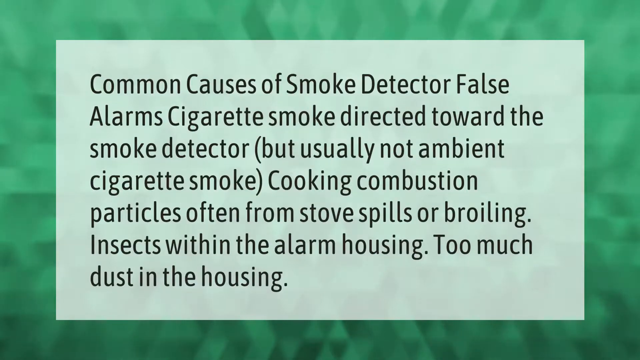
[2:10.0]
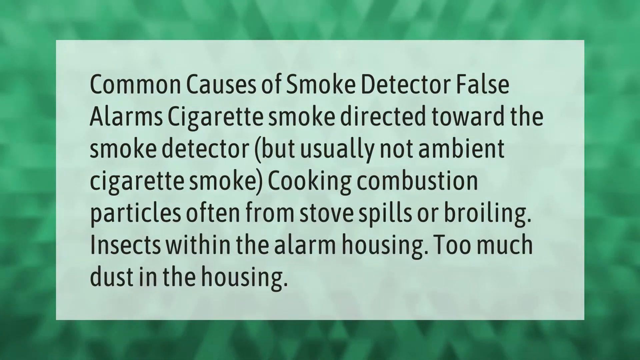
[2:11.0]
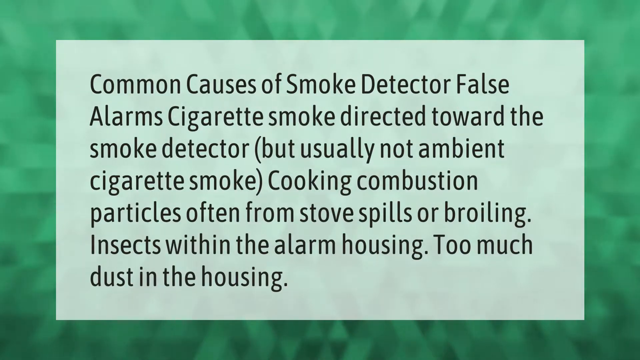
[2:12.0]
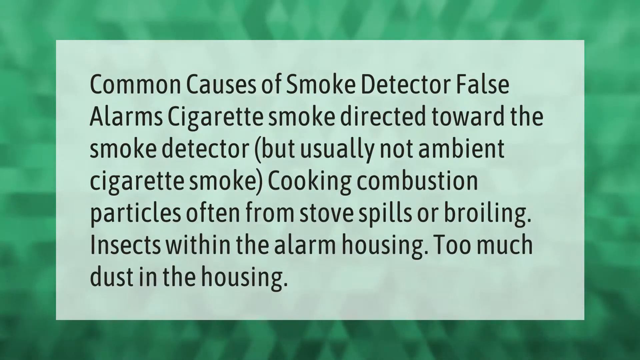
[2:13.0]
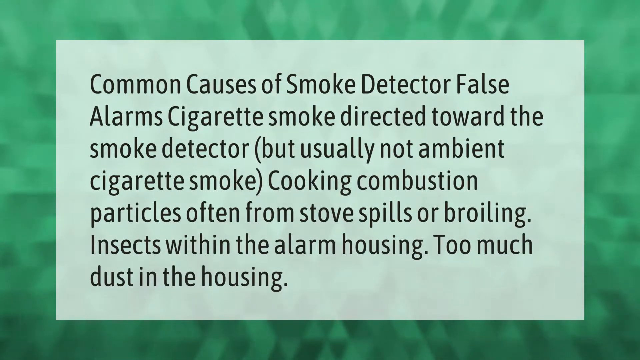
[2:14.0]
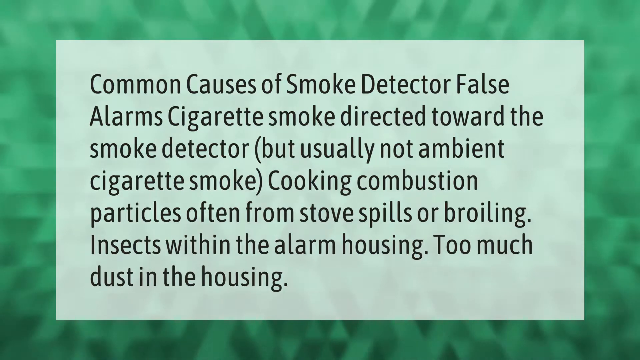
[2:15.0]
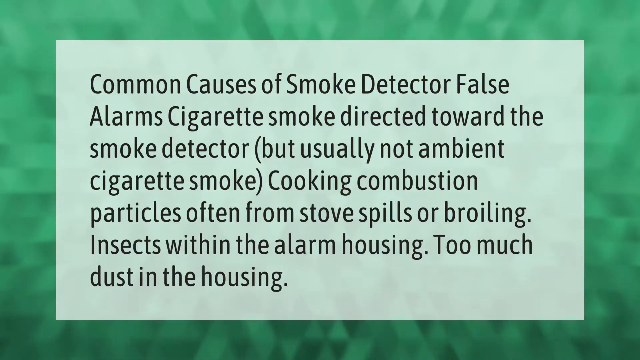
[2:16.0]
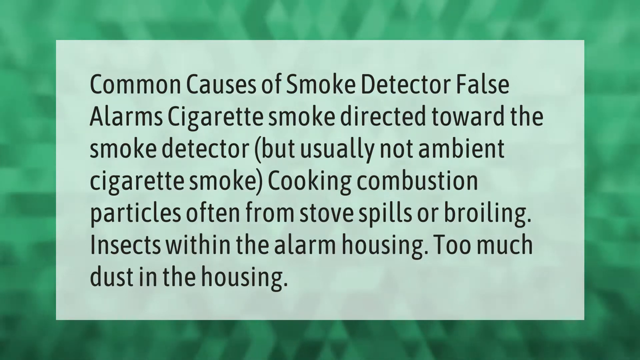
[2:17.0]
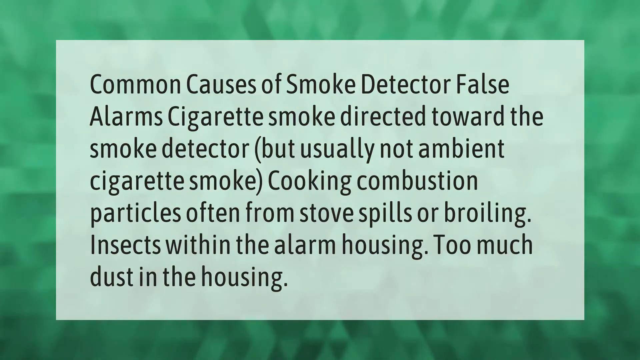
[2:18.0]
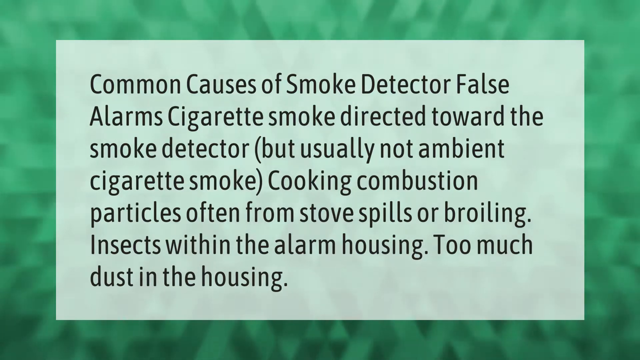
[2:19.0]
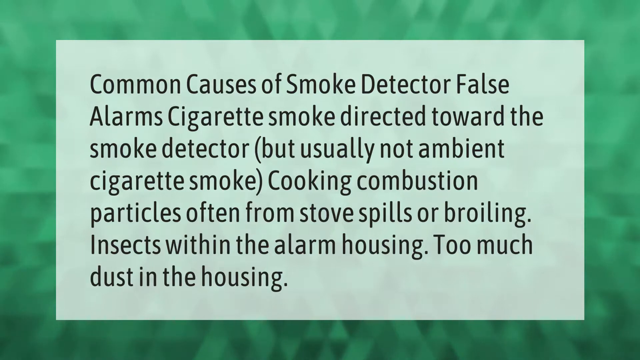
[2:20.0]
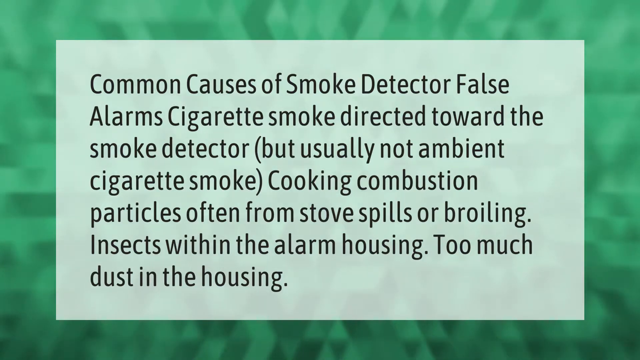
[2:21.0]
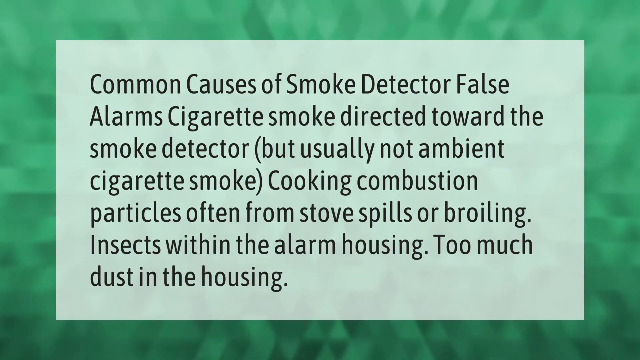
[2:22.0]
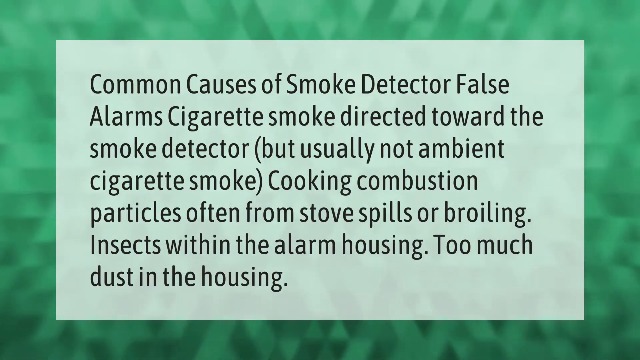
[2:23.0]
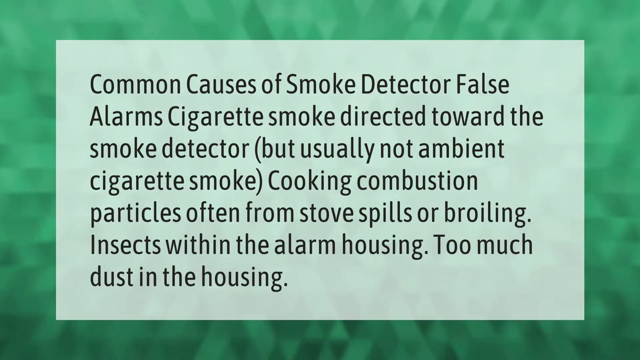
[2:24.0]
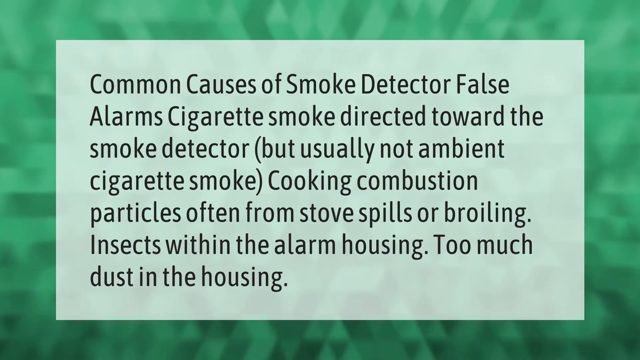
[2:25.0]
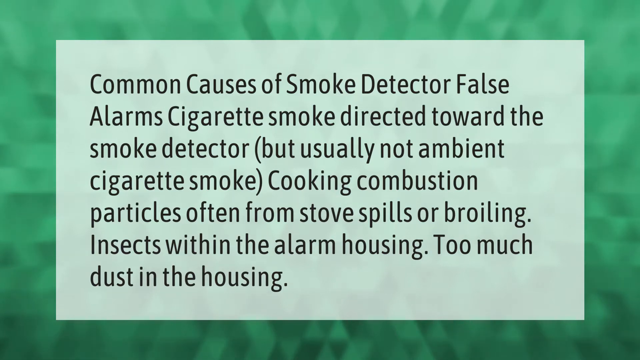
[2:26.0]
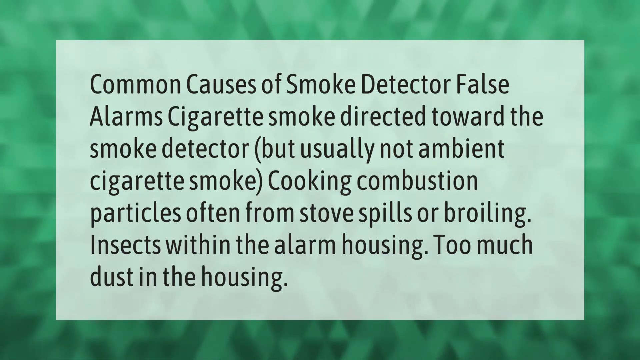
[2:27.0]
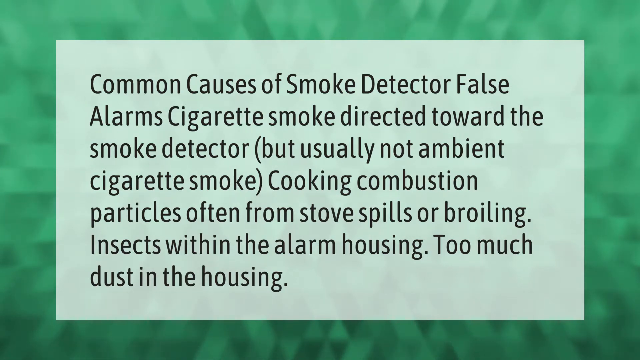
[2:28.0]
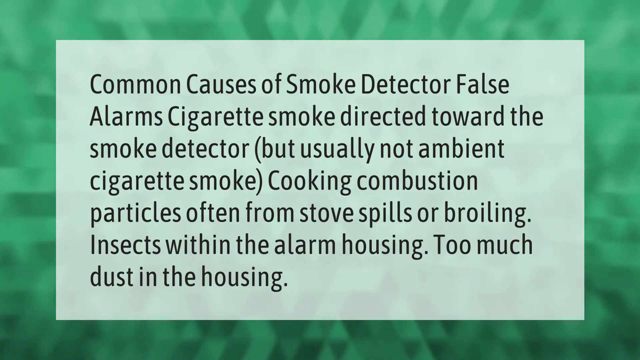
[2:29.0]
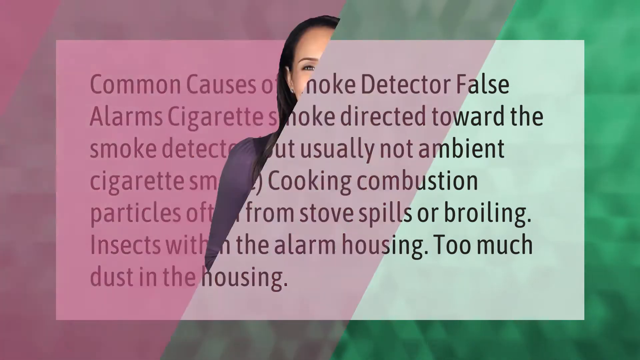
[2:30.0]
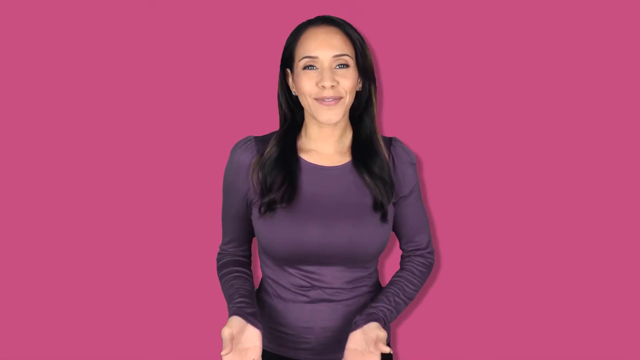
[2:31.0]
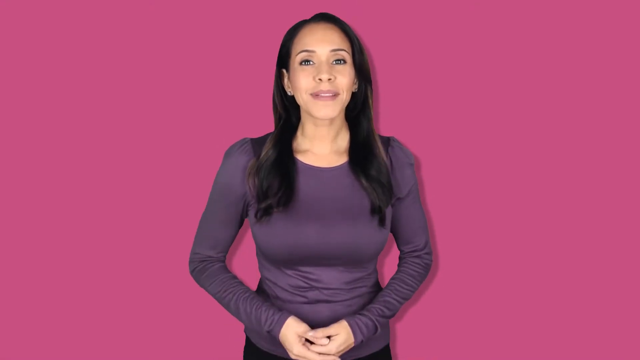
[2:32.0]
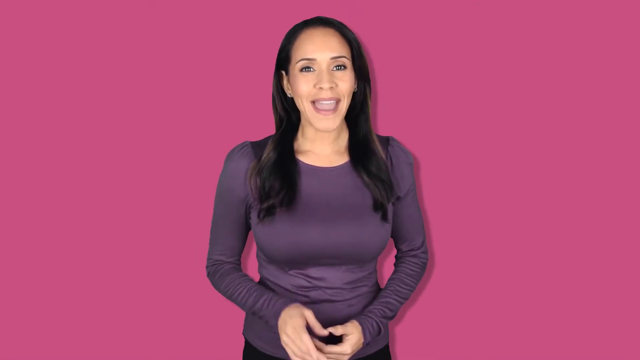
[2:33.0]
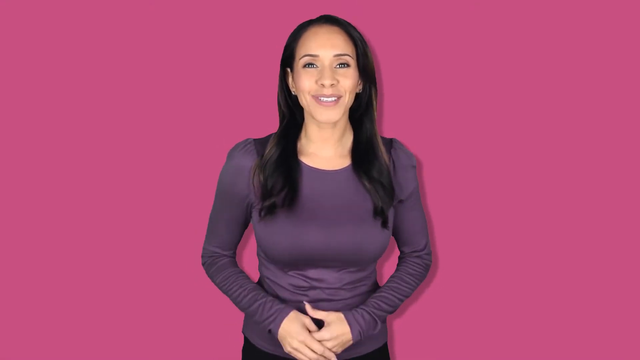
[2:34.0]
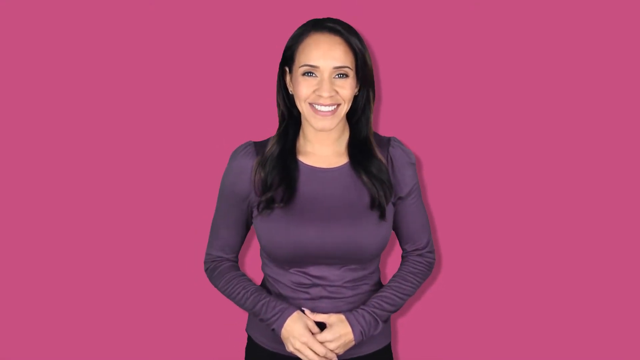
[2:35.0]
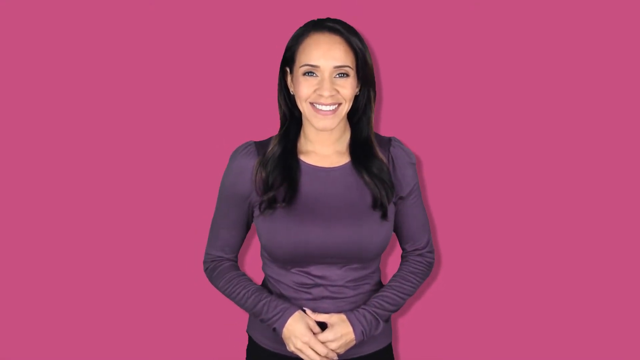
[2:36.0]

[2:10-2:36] The text "Common causes of smoke detector false alarms" is on screen, listing "cigarette smoke directed toward the smoke detector but usually not ambient cigarette smoke, cooking combustion," "insects within the alarm housing, too much dust in the housing." Then the woman, in purple, speaks intently toward the camera, smiling as she speaks and looking at the screen.